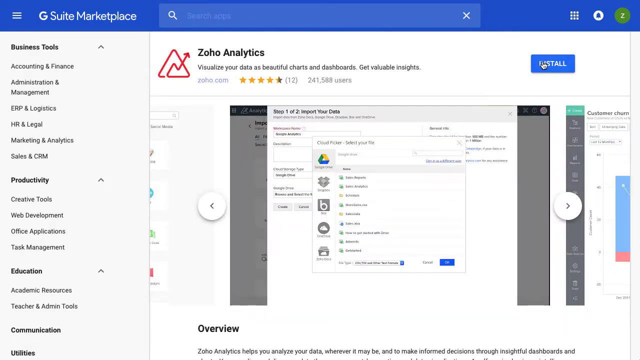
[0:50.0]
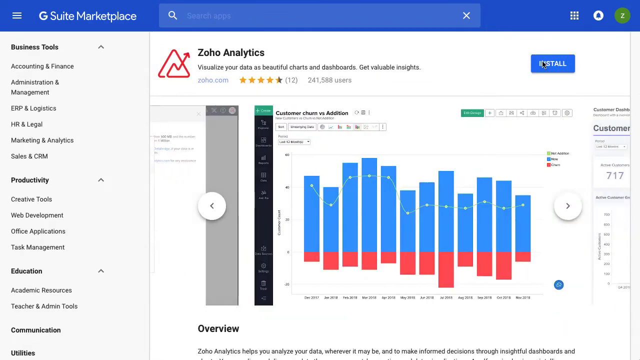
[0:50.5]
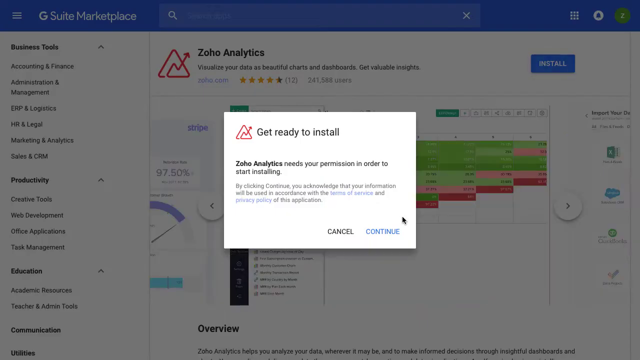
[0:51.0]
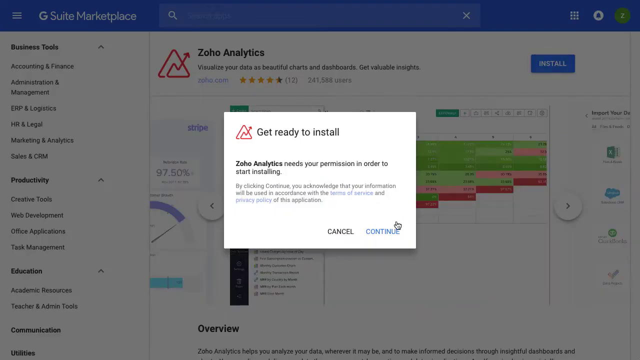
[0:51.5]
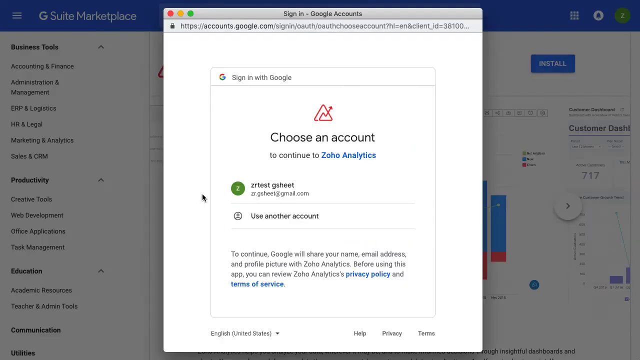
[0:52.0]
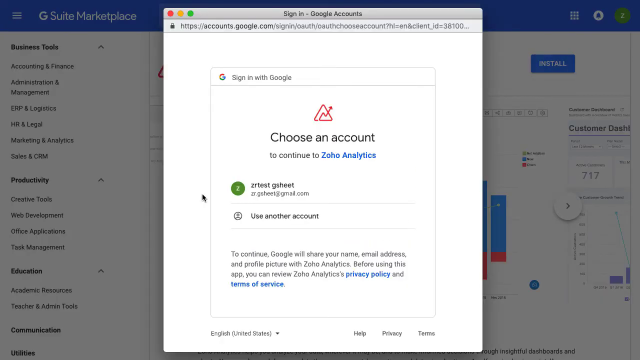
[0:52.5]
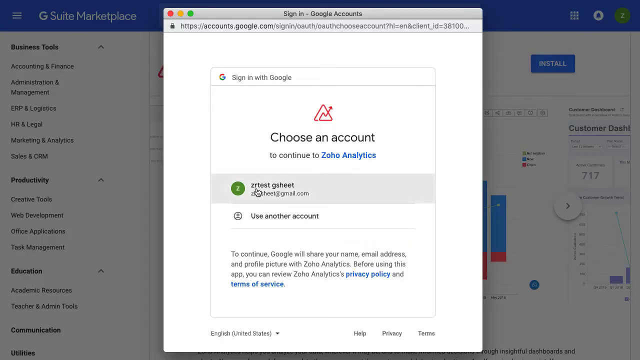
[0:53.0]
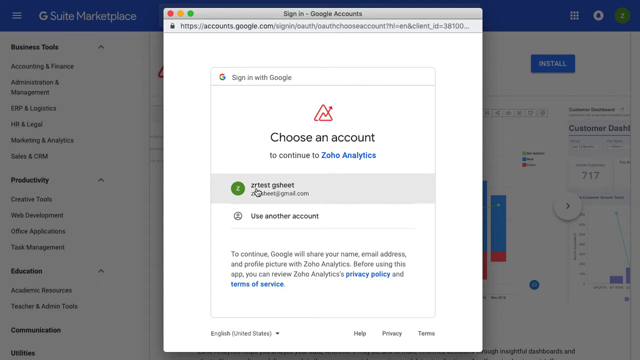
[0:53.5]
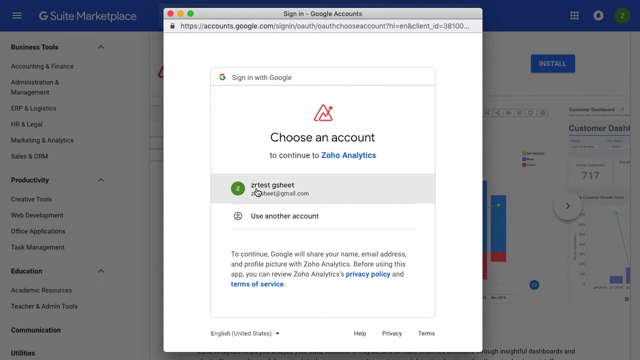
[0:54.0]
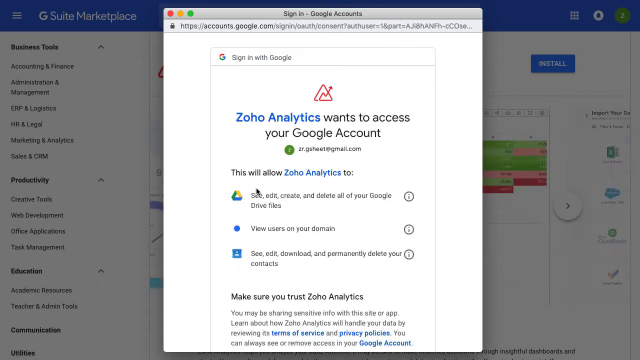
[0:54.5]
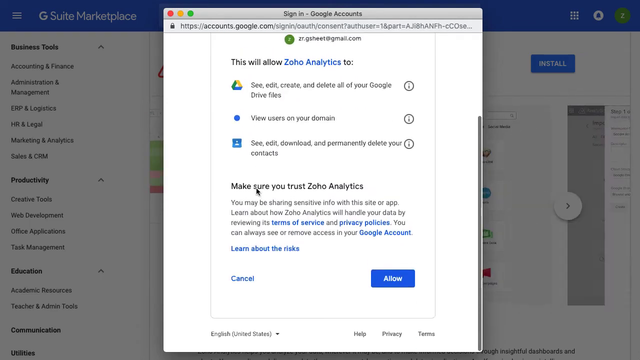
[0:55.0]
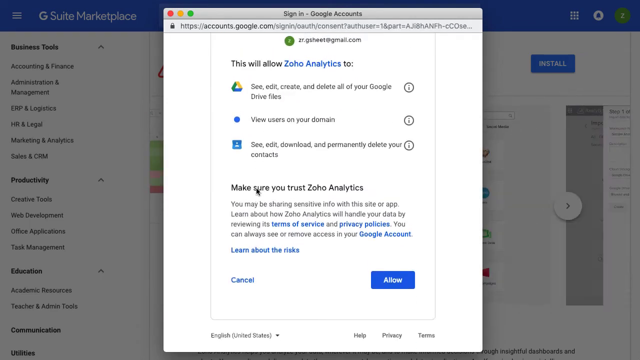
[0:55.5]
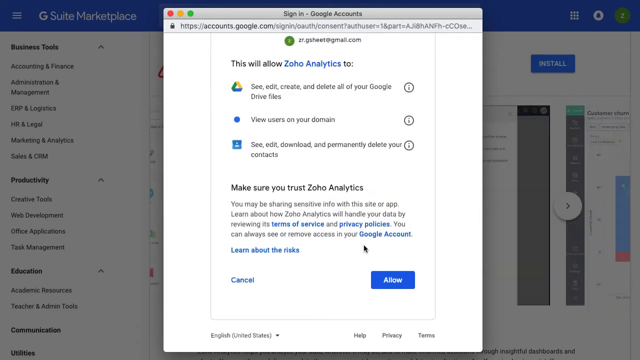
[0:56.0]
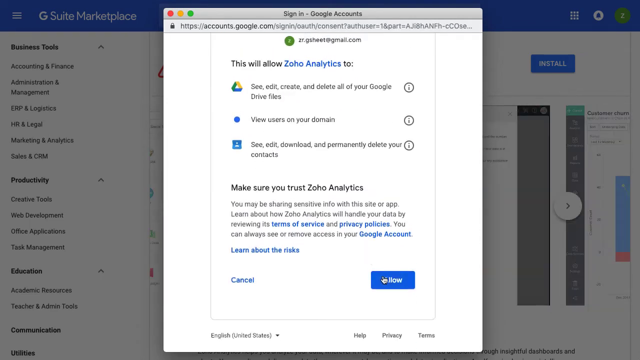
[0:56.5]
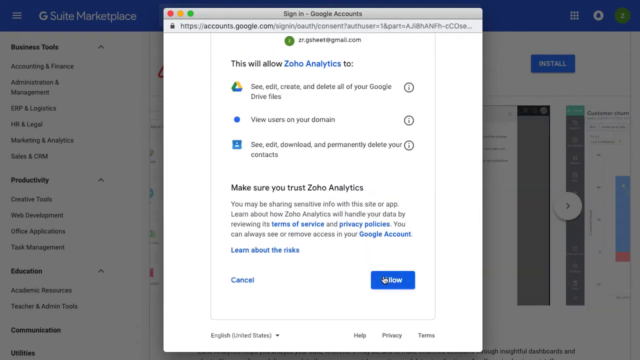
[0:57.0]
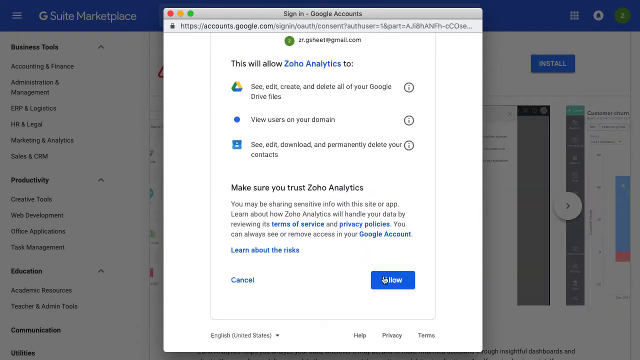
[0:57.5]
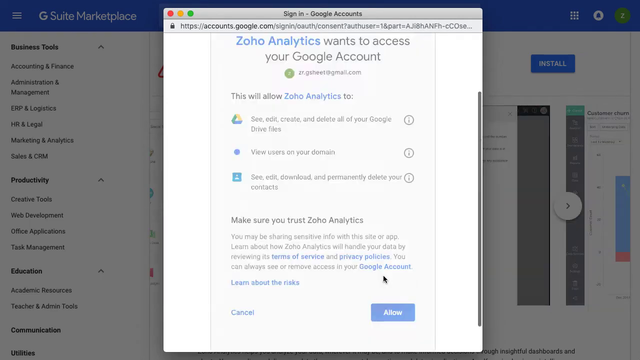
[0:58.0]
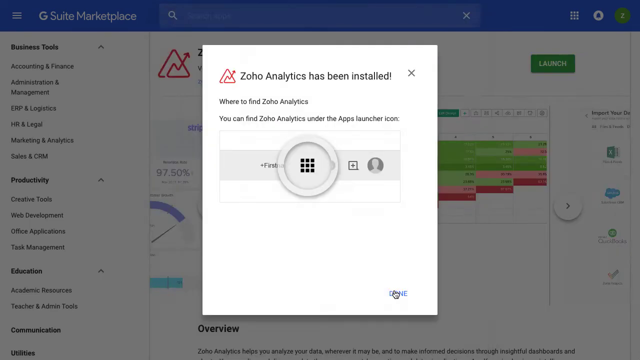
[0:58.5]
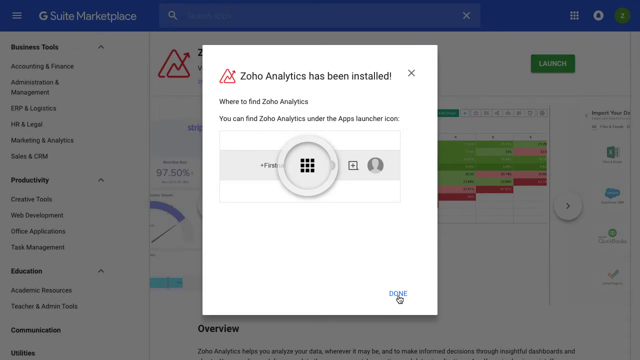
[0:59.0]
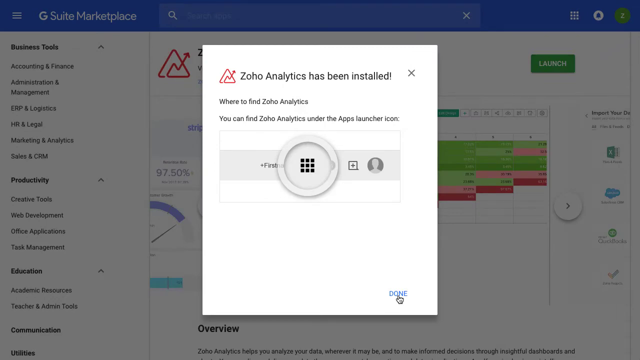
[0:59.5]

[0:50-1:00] The Zoho Analytics app is shown on the G Suite Marketplace website. The person scrolls through screenshots of the app showing graphs, charts and analytics; one chart has many green and red stripes and might be a spreadsheet. A window appears saying "get ready to install", and the cursor hovers over the blue continue link and clicks it. Another window says "choose an account to continue to Zoho Analytics", and the person chooses their Gmail account. They scroll down past some information and click the allow button, then click a button that says done, and a message says the Zoho app has been installed. The app page has black text on a white background and a star rating with 12 reviews. On the left are sections labeled "business tools", "productivity" and "education" with more links.